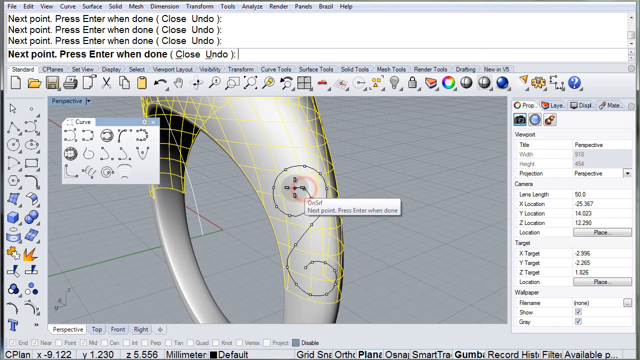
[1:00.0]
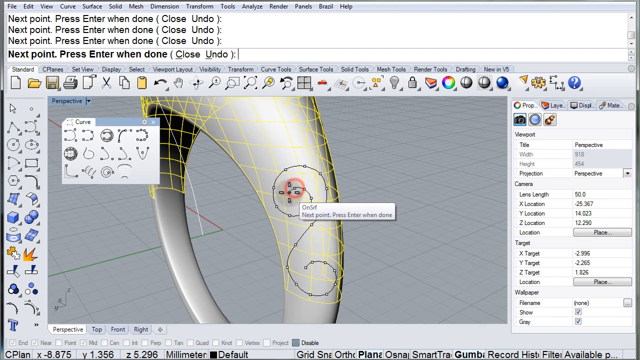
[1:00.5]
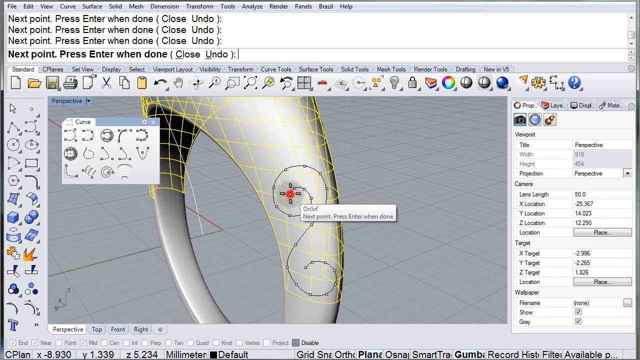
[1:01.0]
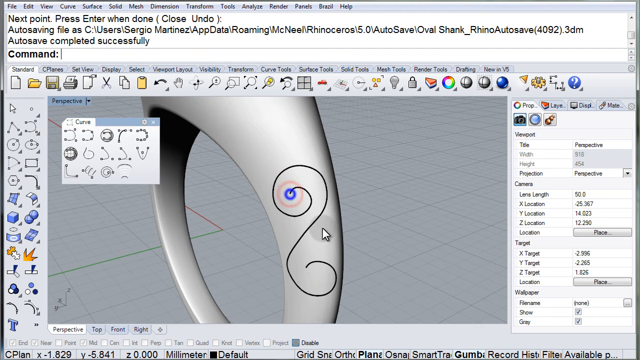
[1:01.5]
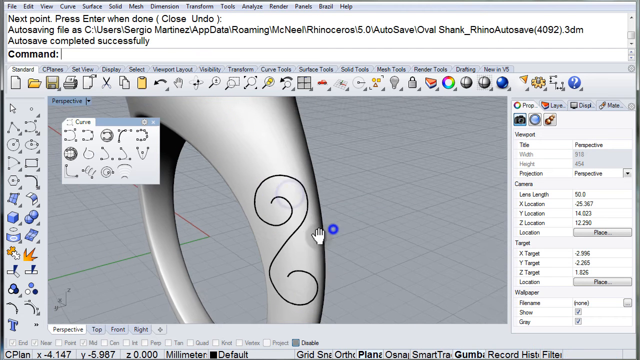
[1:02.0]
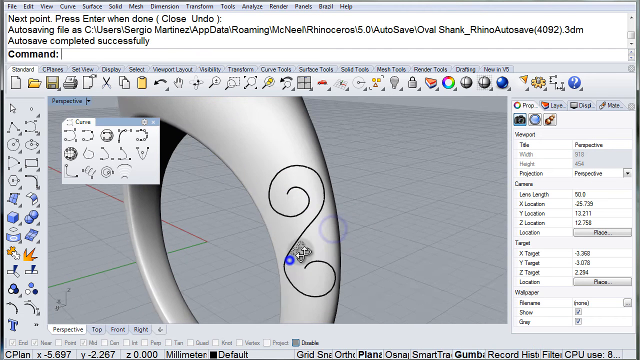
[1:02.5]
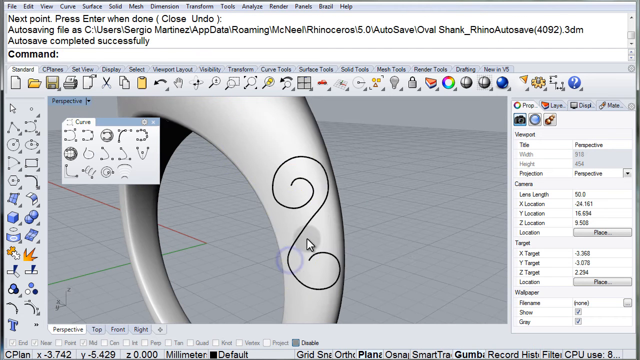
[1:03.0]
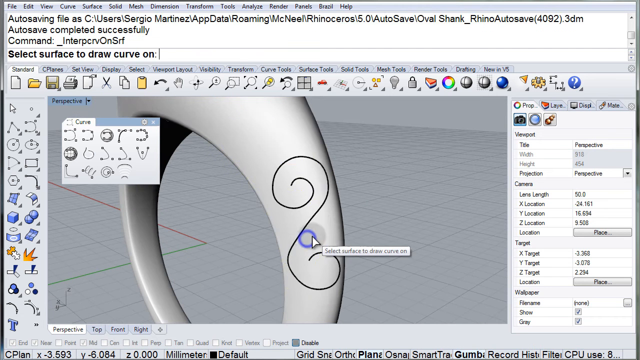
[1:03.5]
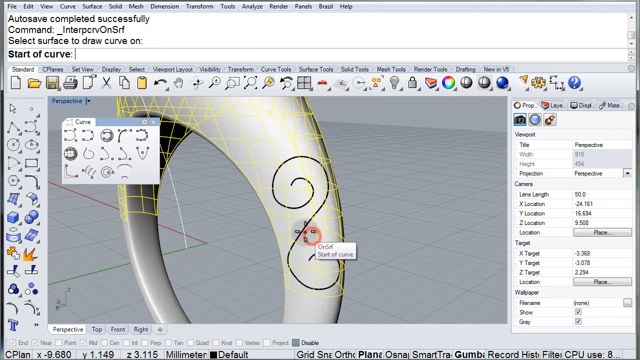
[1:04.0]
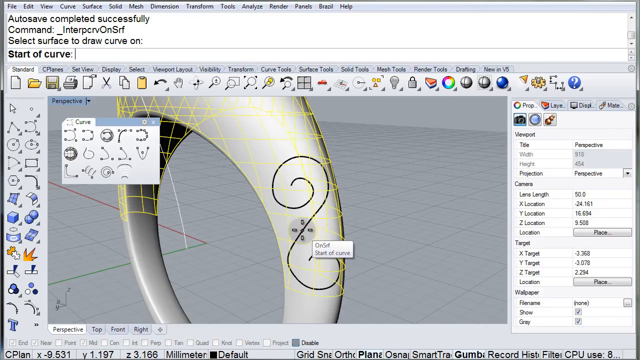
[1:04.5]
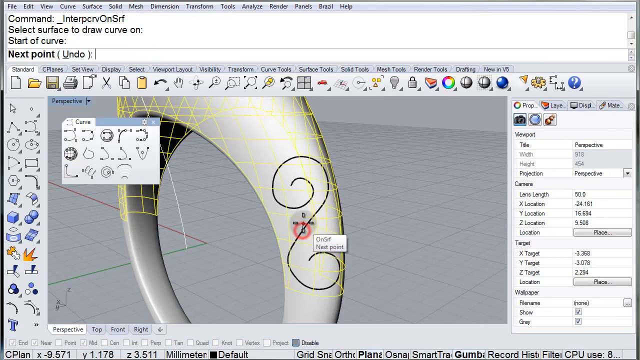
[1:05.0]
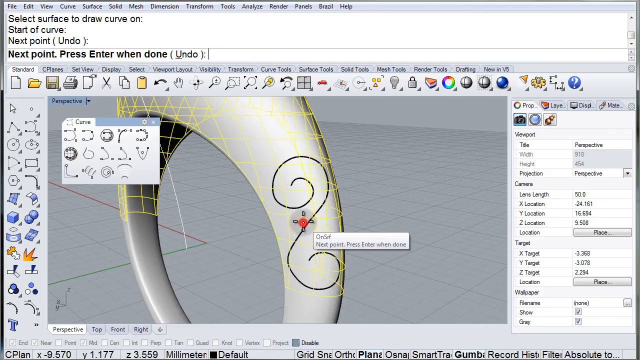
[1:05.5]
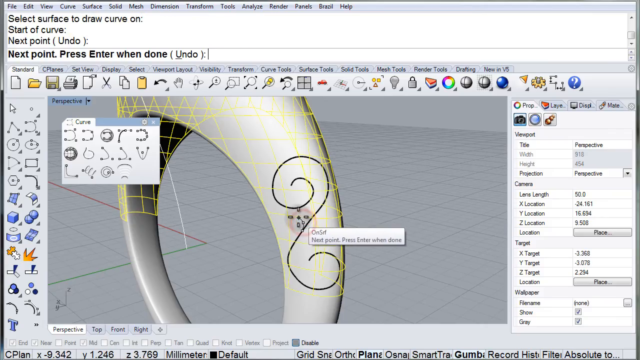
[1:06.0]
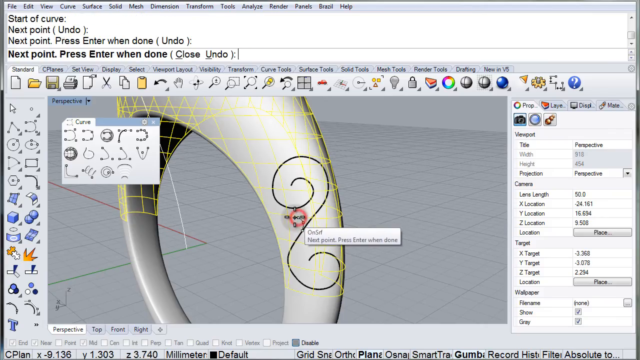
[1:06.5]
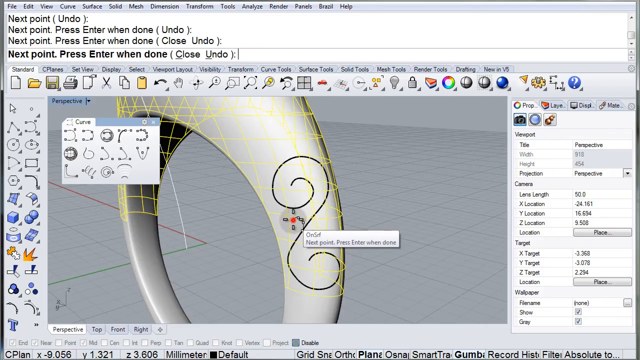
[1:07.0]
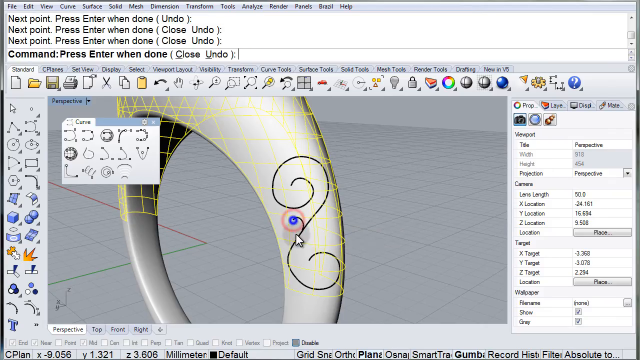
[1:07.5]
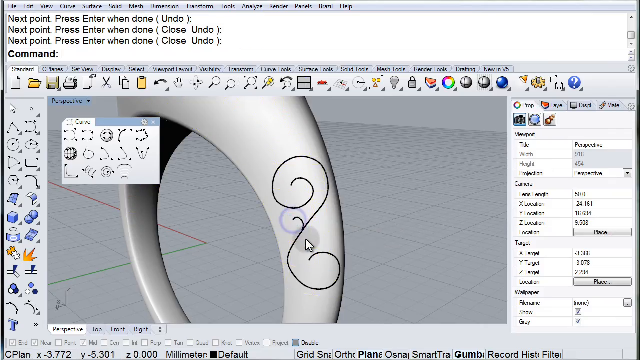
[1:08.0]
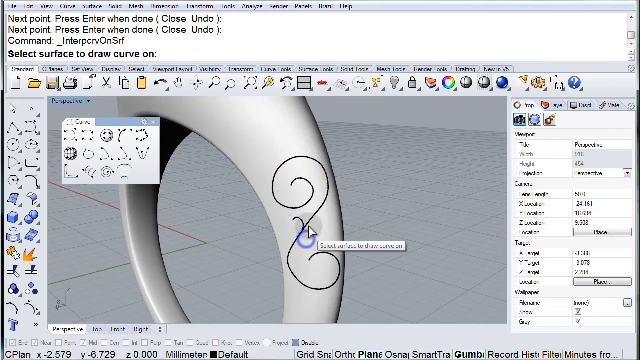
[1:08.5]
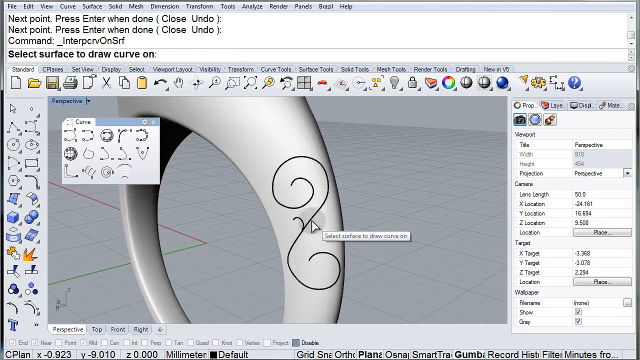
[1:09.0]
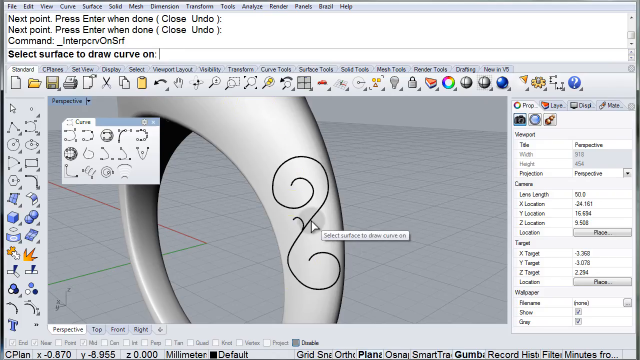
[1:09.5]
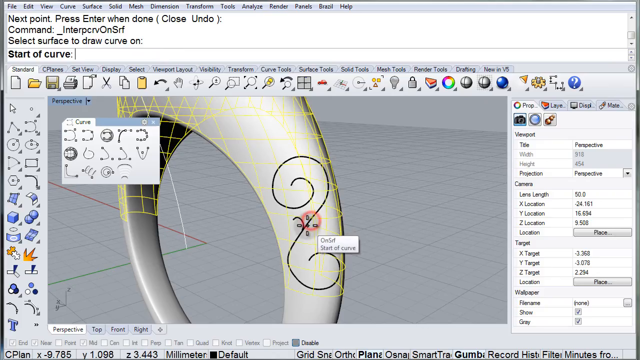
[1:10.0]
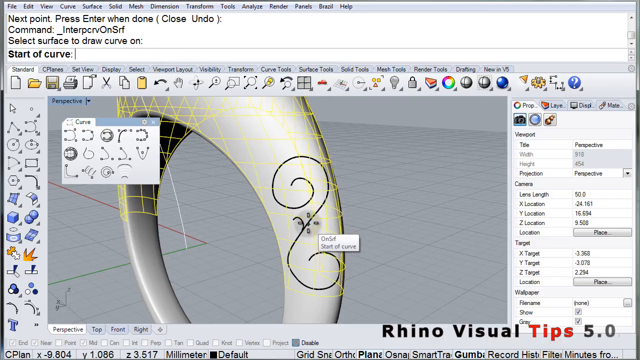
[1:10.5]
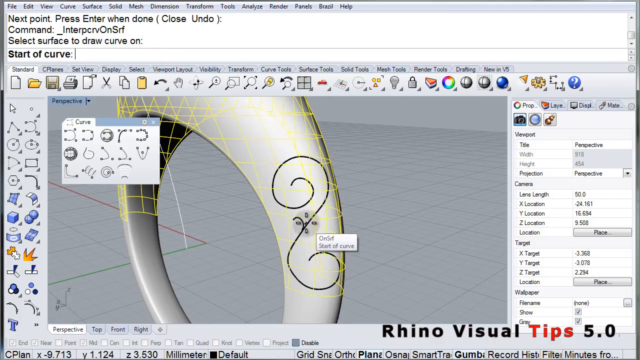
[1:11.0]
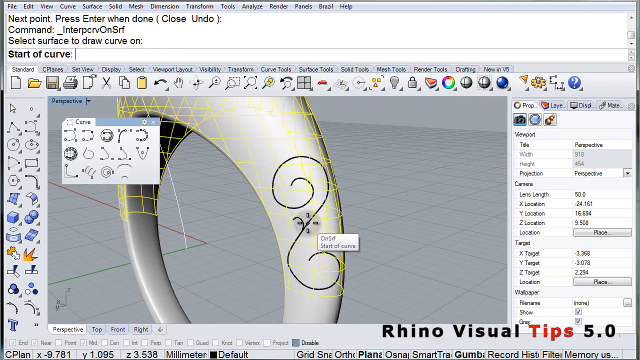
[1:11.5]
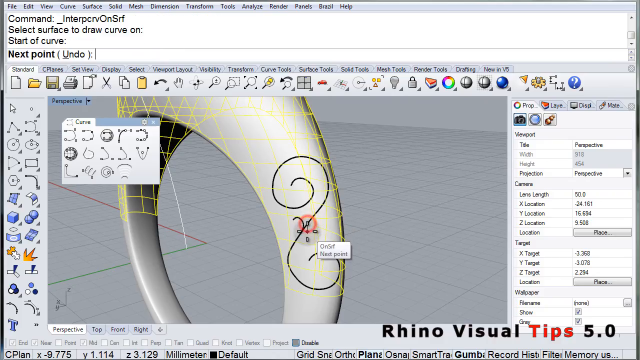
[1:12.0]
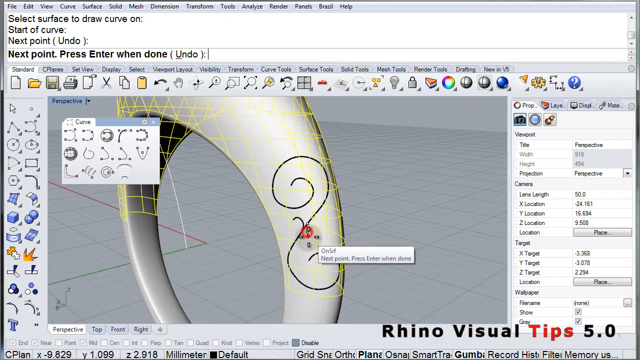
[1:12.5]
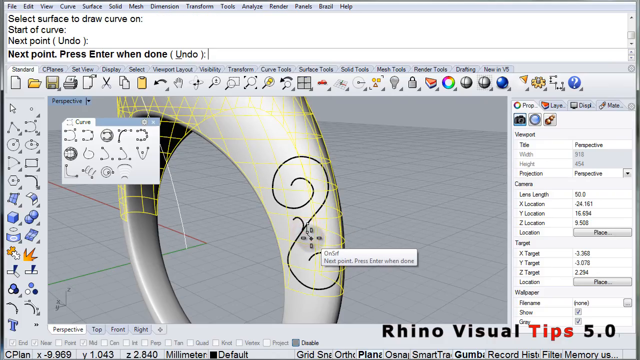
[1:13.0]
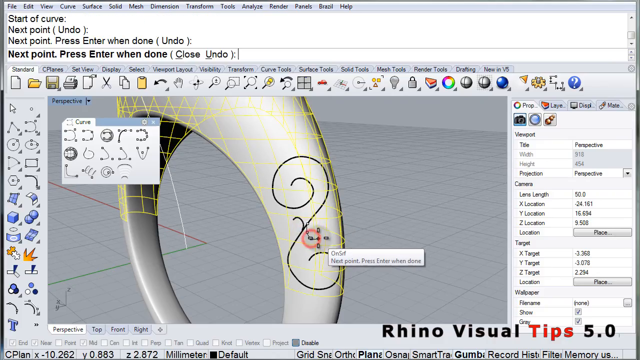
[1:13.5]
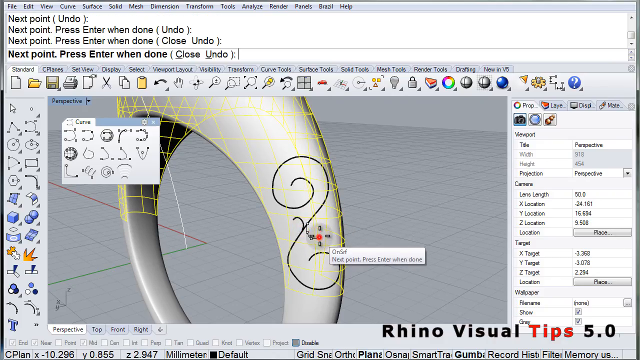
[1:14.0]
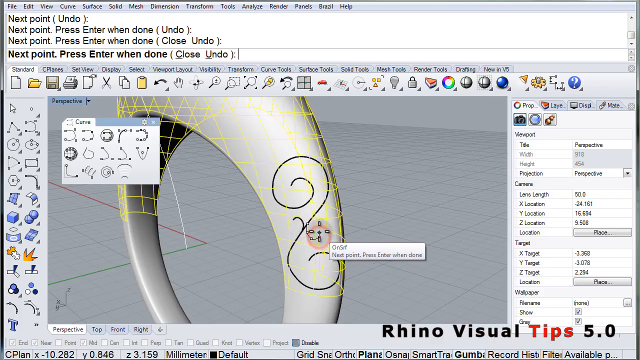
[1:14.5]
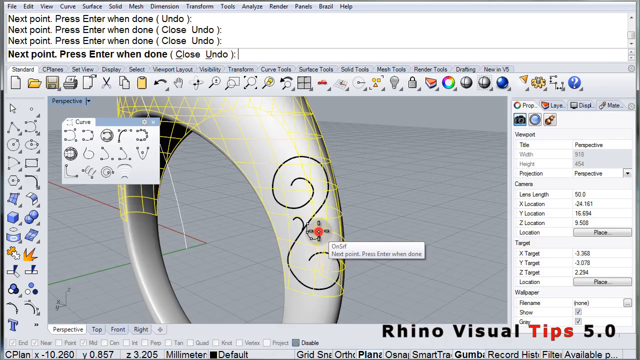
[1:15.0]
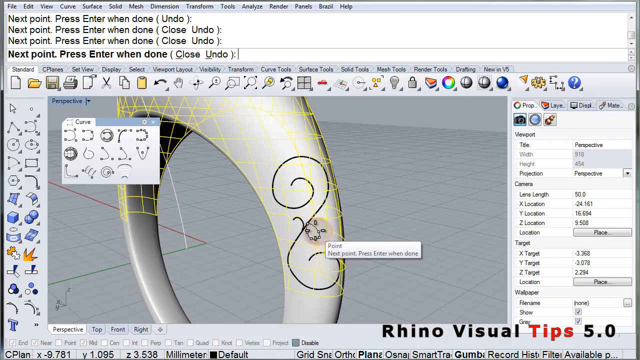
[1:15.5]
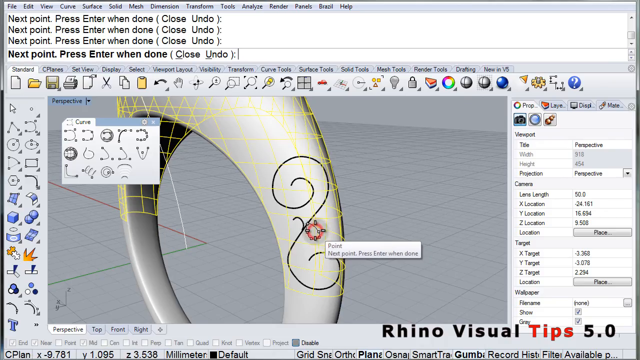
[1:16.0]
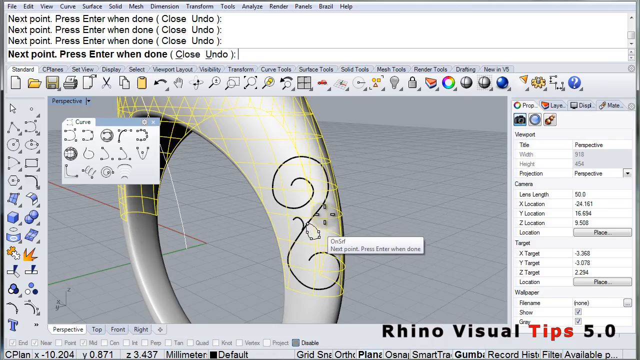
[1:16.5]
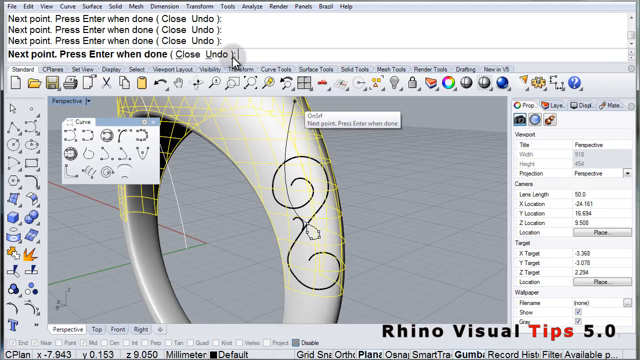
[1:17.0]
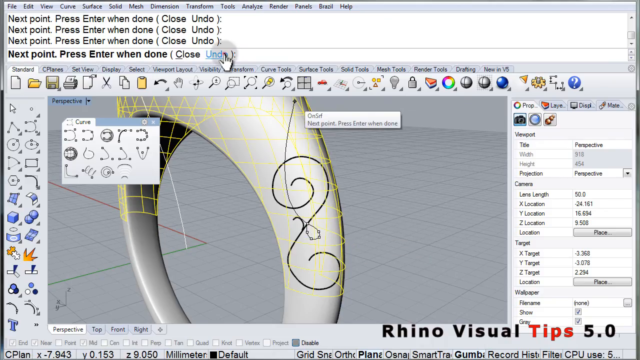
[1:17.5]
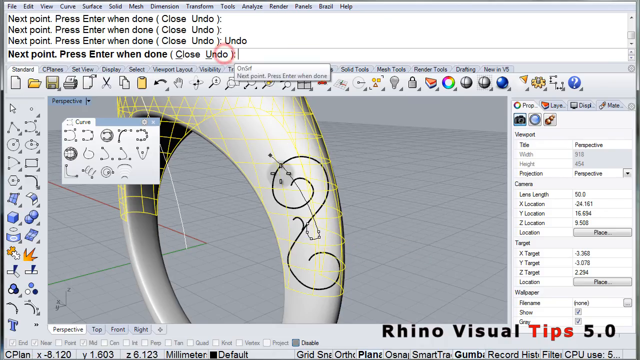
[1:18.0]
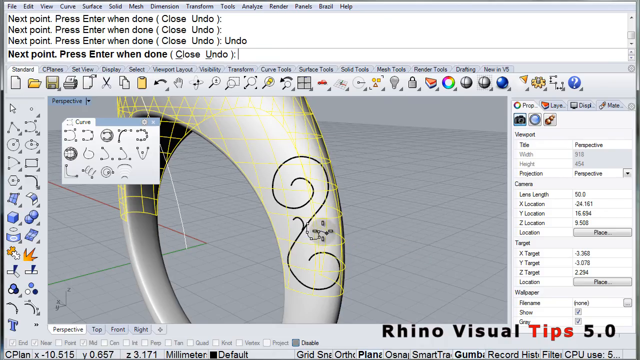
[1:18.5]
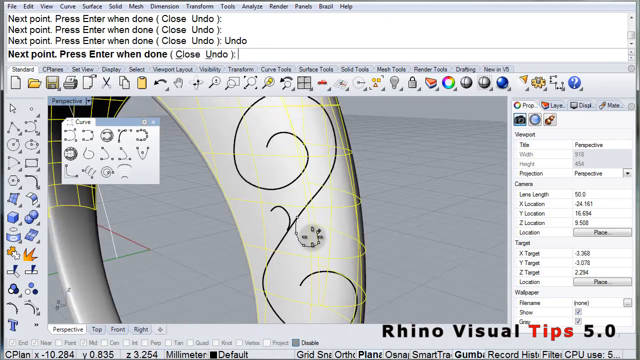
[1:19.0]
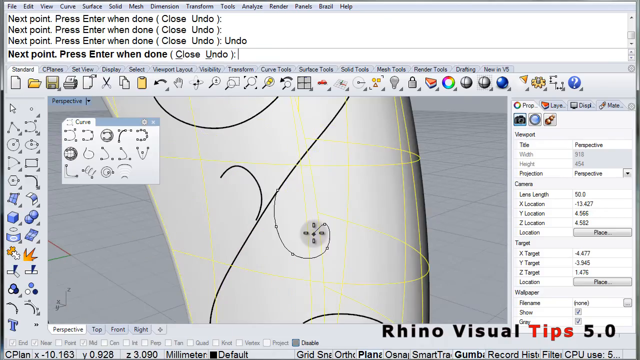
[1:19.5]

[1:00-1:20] The mouse continues clicking to finish the spiral shape. When it finishes, apparently with a double click, though this is hard to tell, the yellow grid suddenly disappears and the skeleton outline of dots where it clicked and thin connecting lines becomes one solid black line, while some blue and red circles appear. The mouse starts clicking again, the yellow grid and skeleton outline return, and it makes much shorter little curlicues coming off the center of the diagonal bar between the two spirals. After the first curlicue turns black and the grid disappears, the clicking starts again right away and the grid and skeleton return. This time, instead of finishing the curlicue, the mouse goes off to the side and a really long line appears in the skeleton; the mouse comes back to the curlicue, and the view zooms in really close on the drawing on the side of the ring. At the top there are many lines of text reading "next point, press enter when done" and "close undo"; the mouse clicks "undo" next to the bottom line of that text, and the really long line is undone.